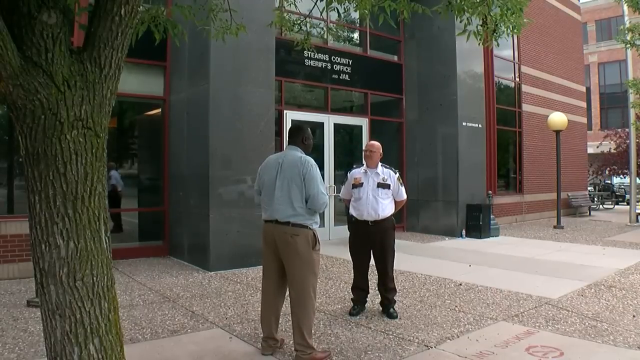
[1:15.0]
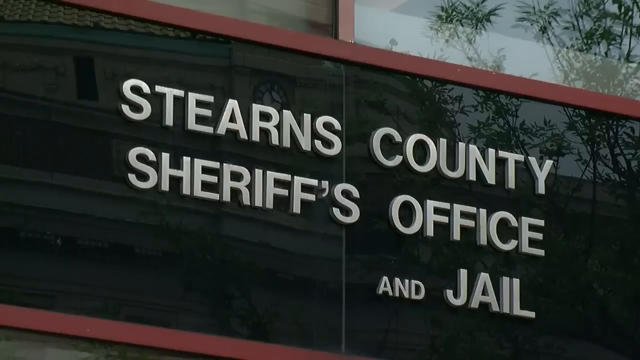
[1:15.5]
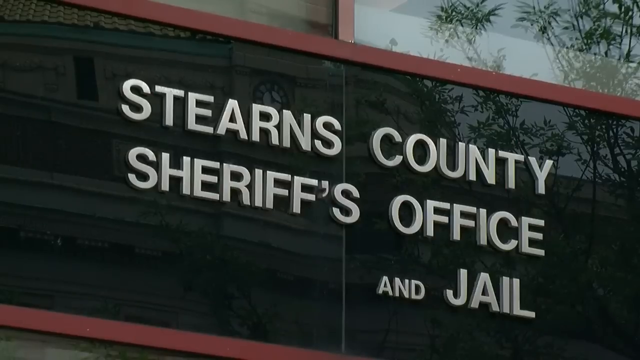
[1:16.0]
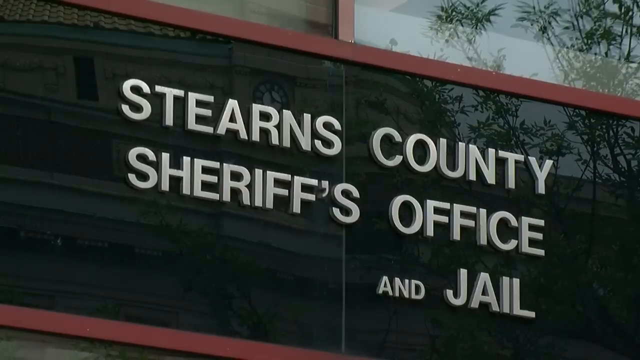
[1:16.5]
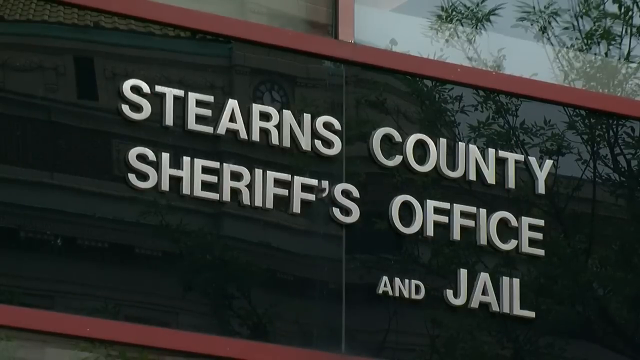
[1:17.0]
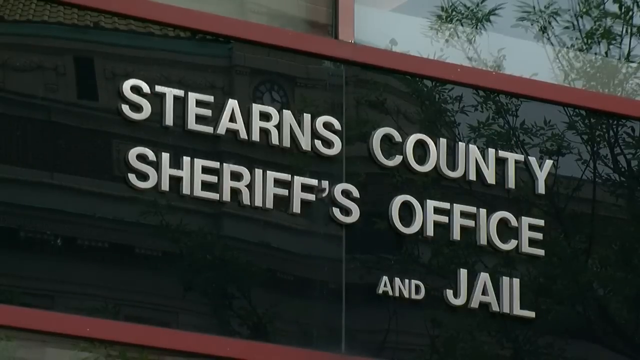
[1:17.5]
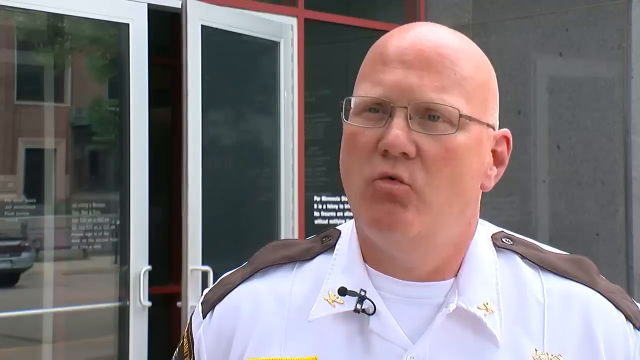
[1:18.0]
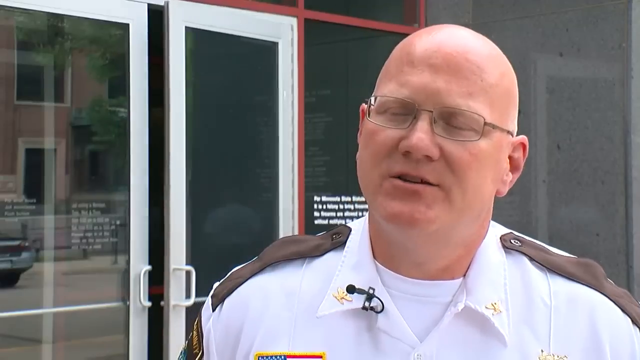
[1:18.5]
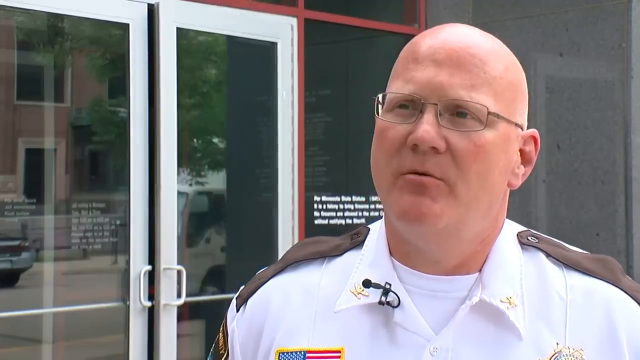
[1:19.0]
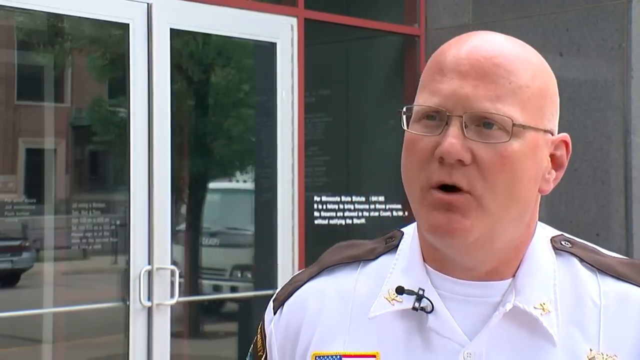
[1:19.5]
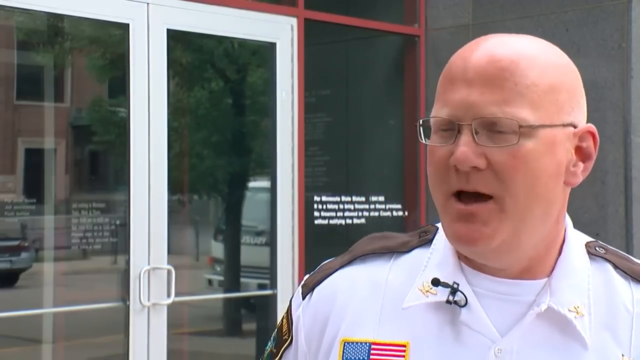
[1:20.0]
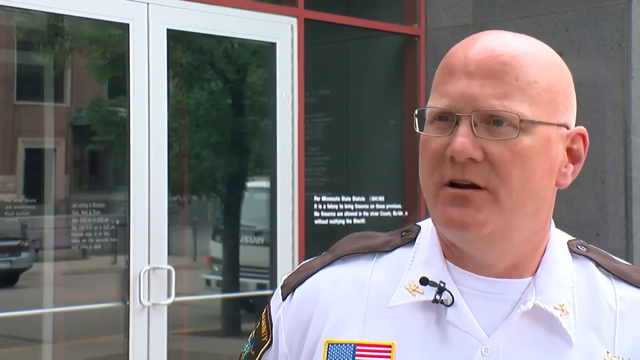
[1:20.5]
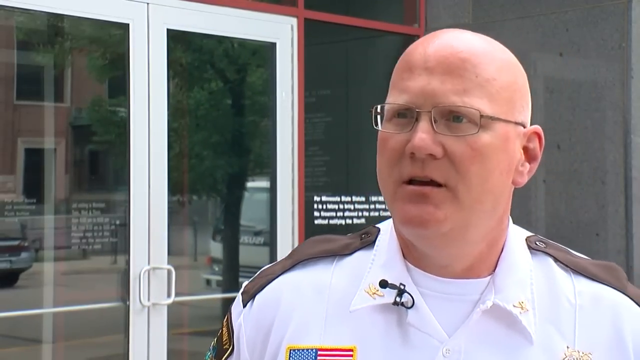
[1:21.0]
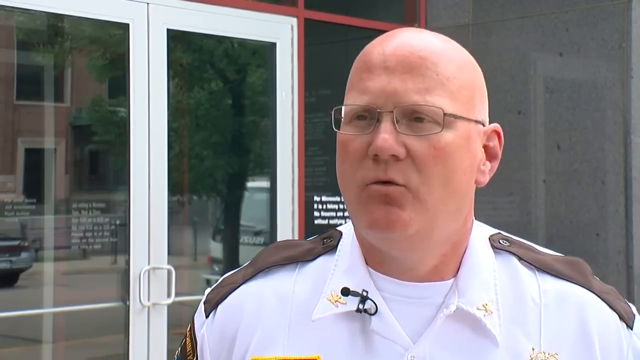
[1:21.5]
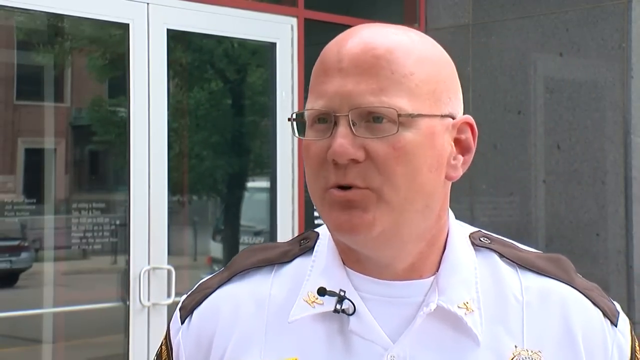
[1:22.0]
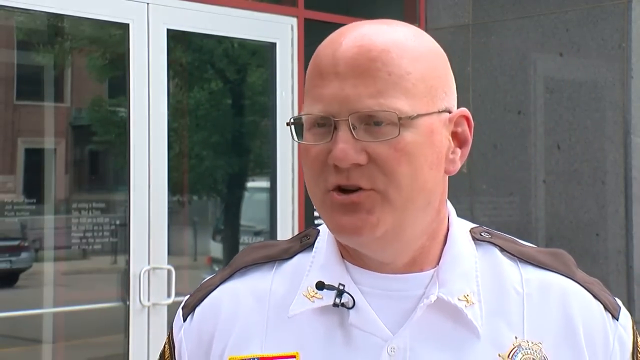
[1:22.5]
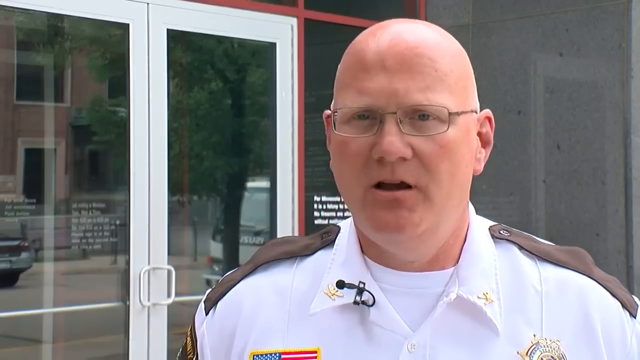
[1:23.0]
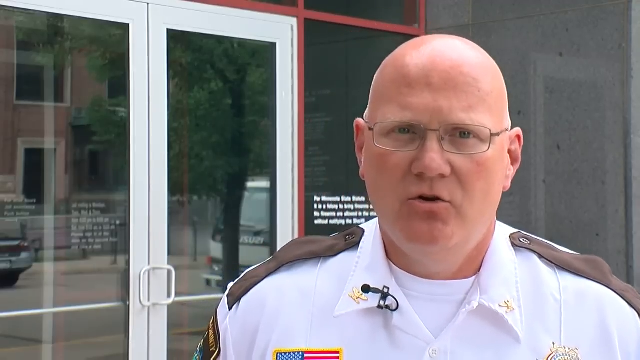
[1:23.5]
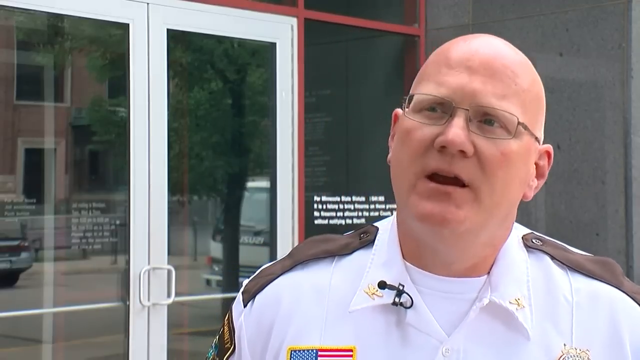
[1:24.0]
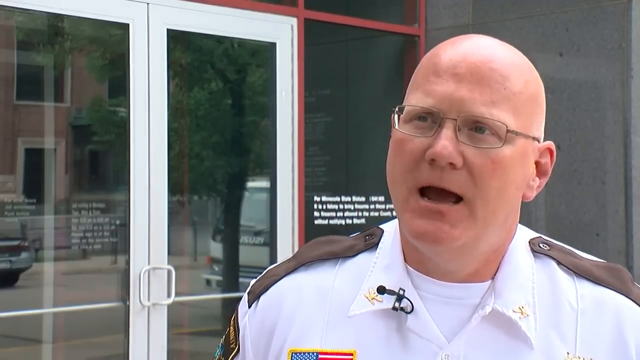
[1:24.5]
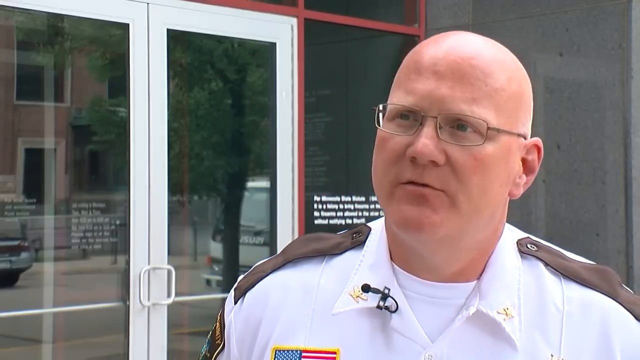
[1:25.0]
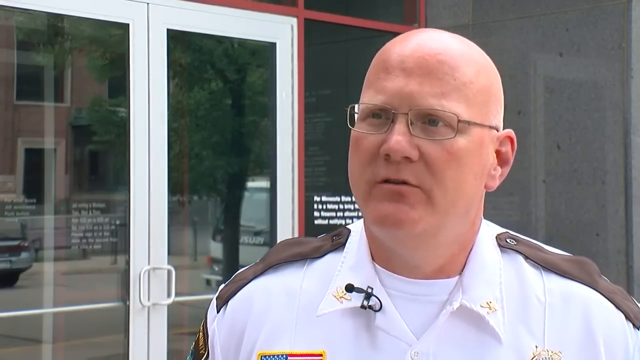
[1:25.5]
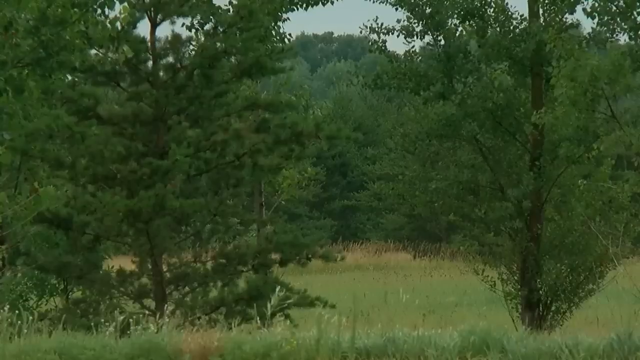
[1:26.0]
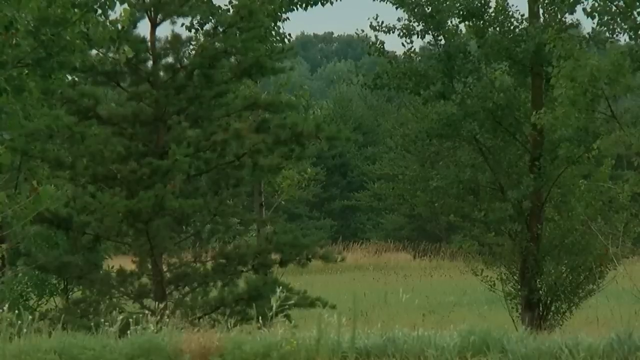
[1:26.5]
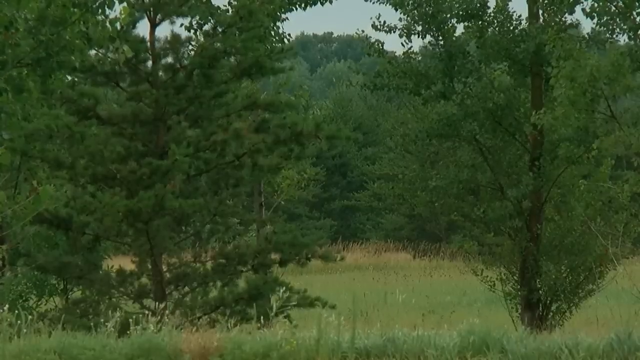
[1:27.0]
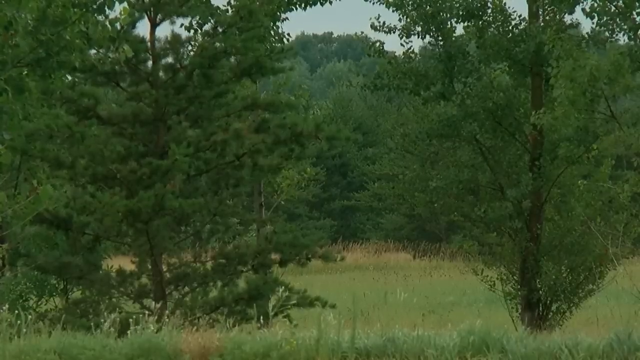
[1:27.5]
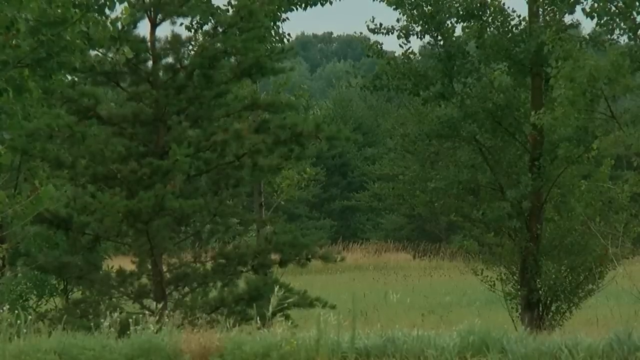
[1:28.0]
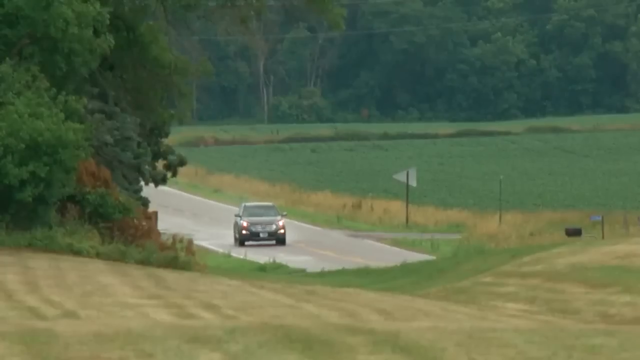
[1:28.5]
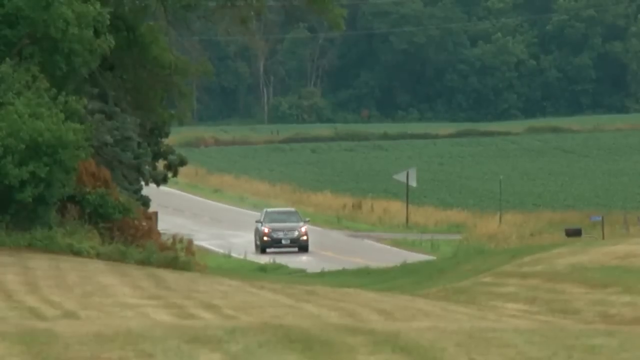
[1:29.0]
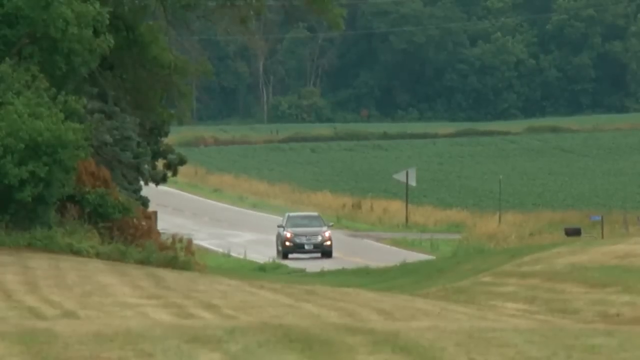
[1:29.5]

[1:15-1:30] The camera zooms in on the "Stearns County Sheriff's Office and jail" sign on top of the building. The video cuts back to more of the interview with the chief deputy. In the background, the door of the station moves, though no one is seen walking in or out. The door's reflection shows an Isuzu truck, another car on the street, and some of the buildings across the street. Next is a closer shot of woods, presumably the wooded area by the mink farm, followed by a country road going through the woods near farms, with a car driving on it. The roads seem secluded and not very busy, and the area appears to be heavily farmland.